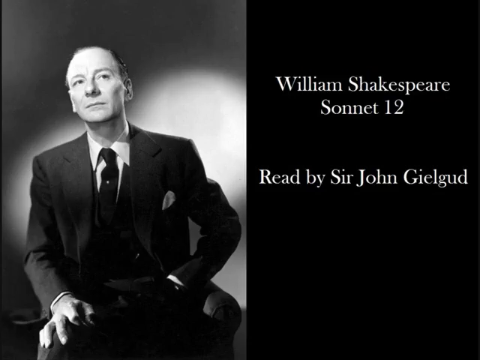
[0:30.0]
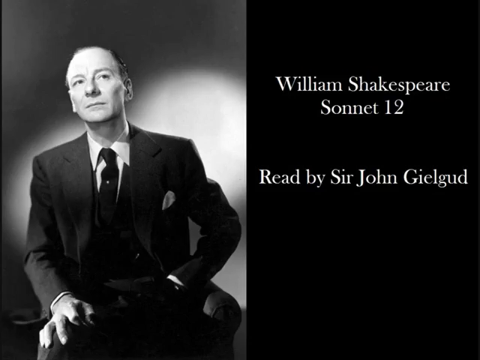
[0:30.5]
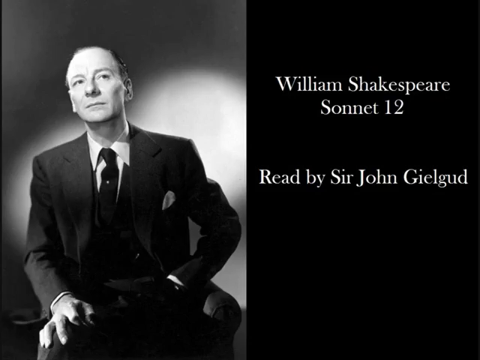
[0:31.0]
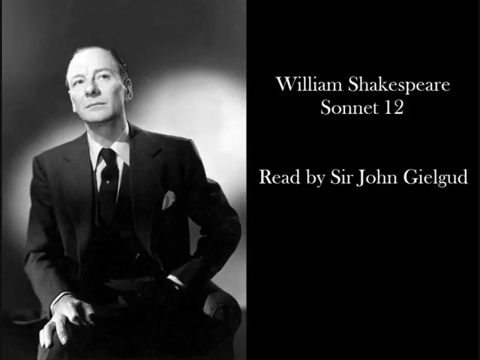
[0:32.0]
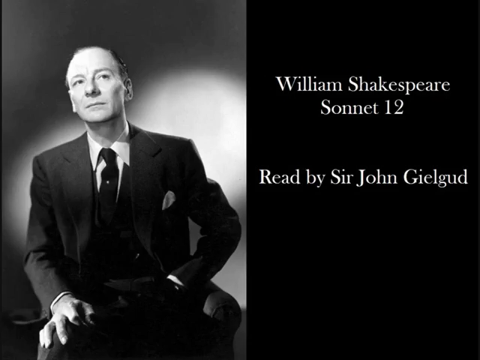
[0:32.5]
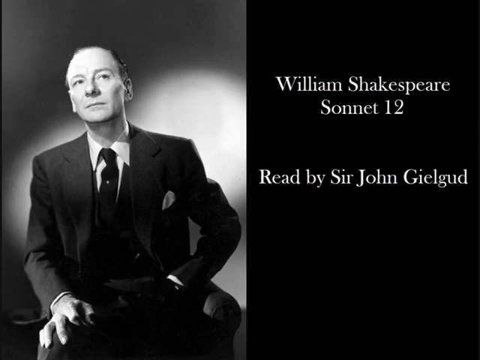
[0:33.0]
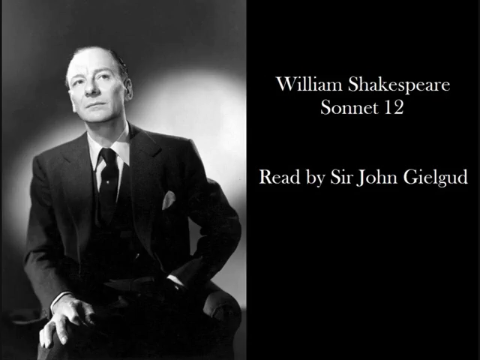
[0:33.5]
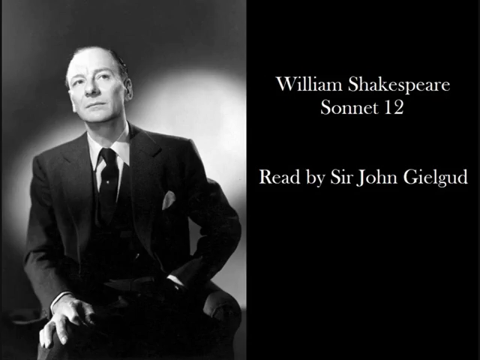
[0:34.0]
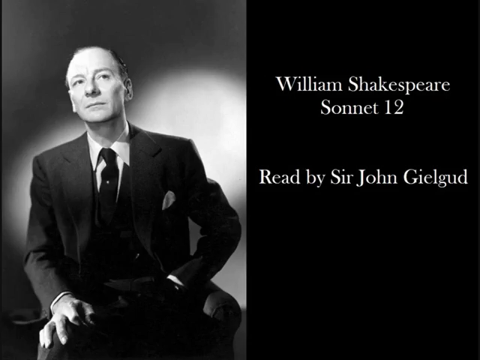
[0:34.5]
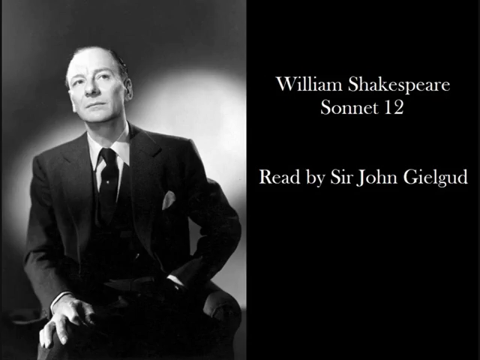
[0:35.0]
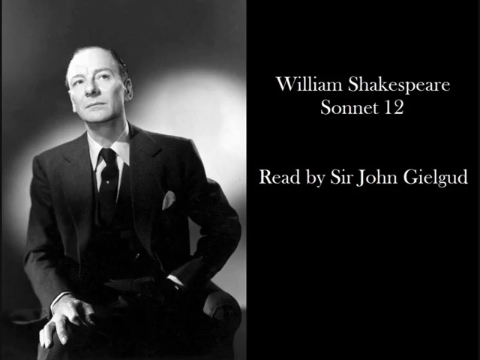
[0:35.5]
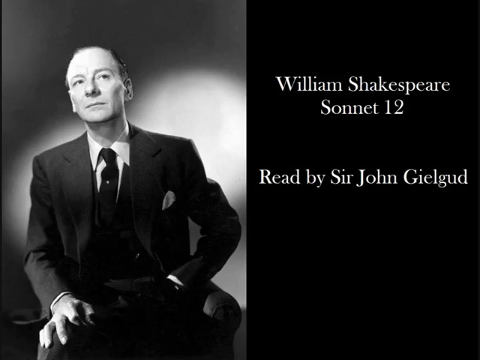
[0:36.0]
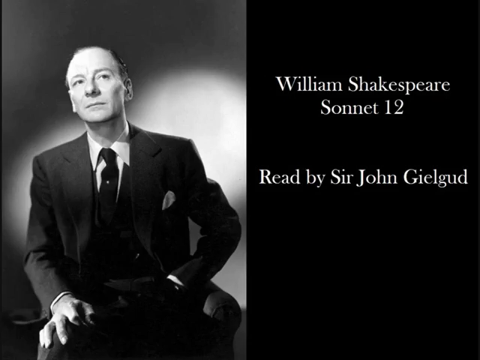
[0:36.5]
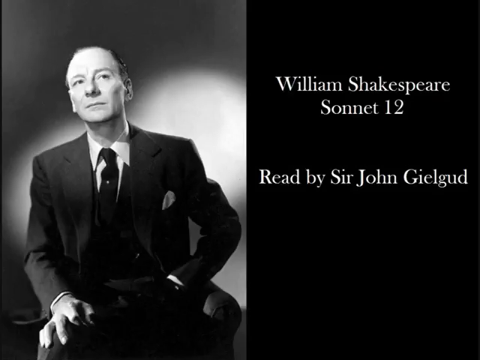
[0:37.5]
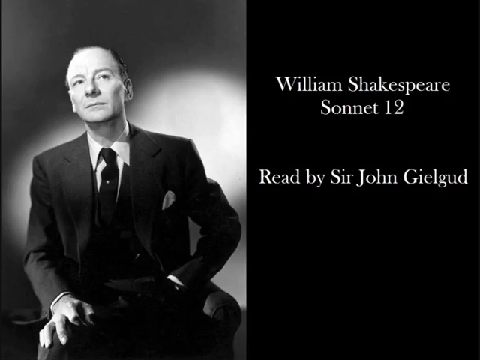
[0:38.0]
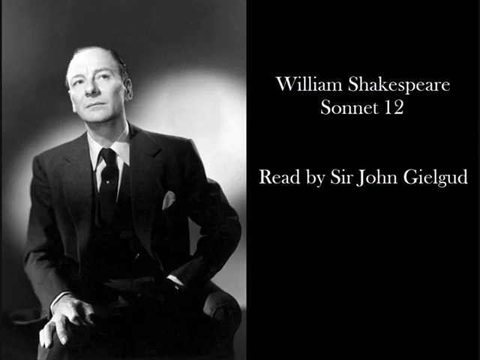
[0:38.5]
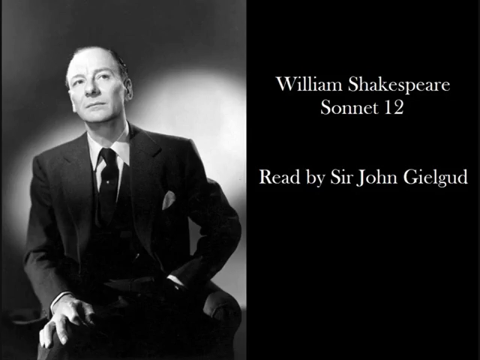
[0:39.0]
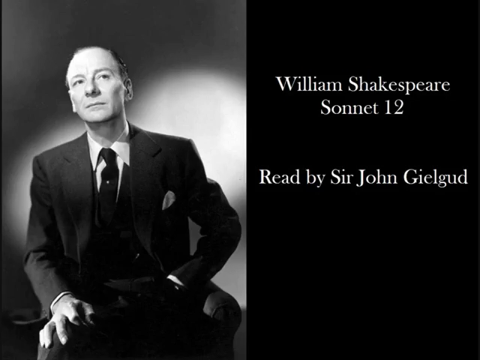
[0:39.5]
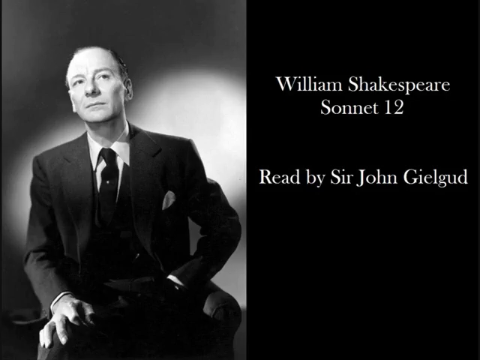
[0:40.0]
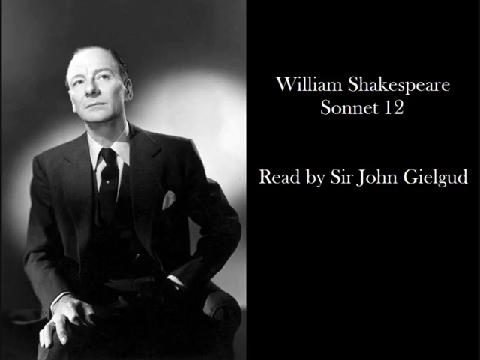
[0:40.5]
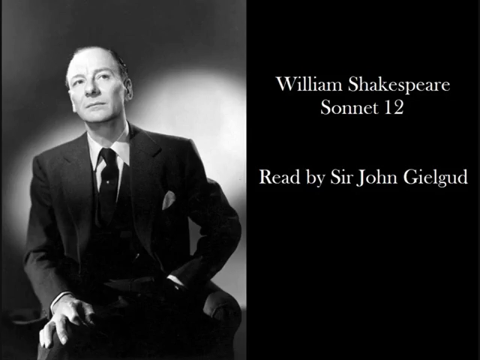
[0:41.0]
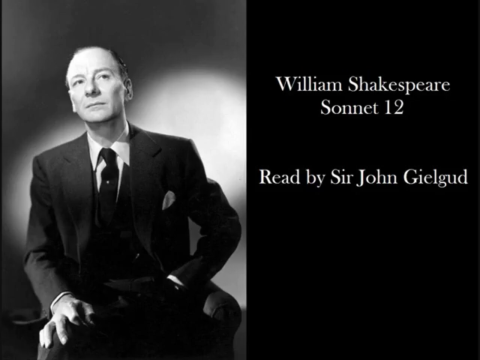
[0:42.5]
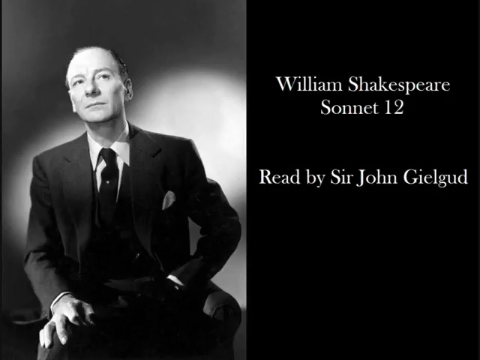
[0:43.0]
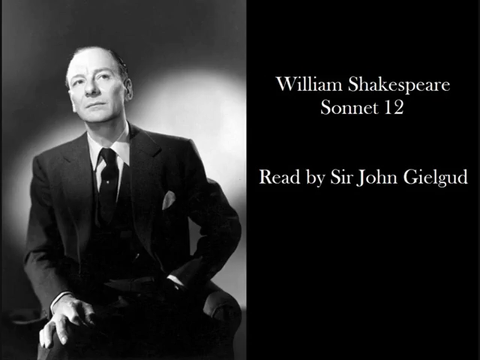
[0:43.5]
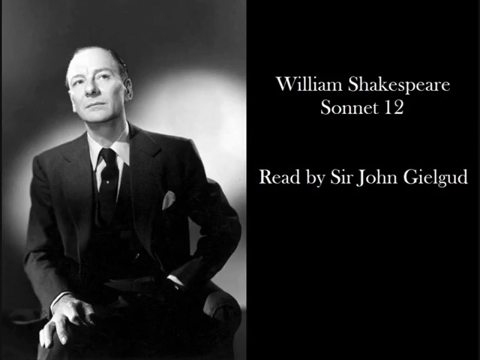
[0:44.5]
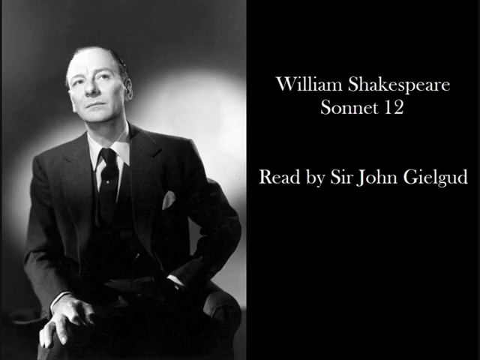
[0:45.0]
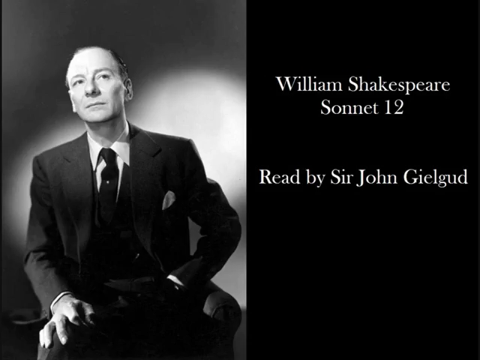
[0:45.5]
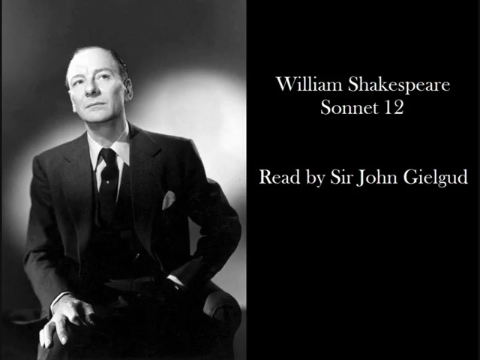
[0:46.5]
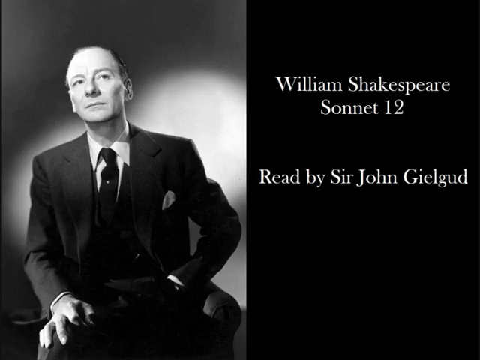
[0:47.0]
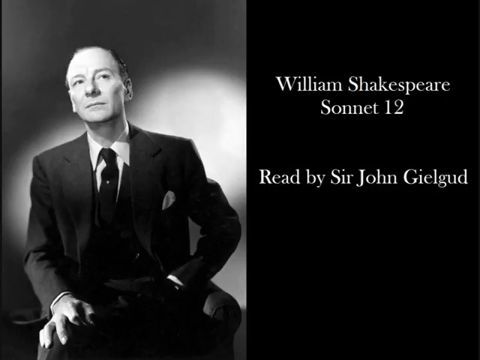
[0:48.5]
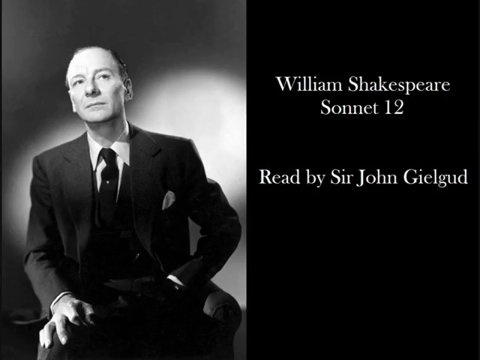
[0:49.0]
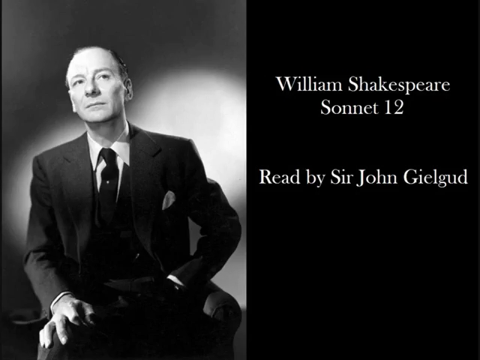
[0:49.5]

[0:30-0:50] The screen remains split in two with nothing changing. On the right, a black background carries white subtitles: "William Shakespeare sonnet 12, read by Sir John Gielgud". On the left is a black and white photo of Sir John sitting in an armchair, wearing a suit with a tie and tissue, his left hand in his pocket and his right hand on his leg. He is looking up. Two theatrical lights light him and the background behind him. He is getting bald and has short hair, with an aristocratic and charismatic look; he looks very much like a Shakespearean type of actor, very British and elegant. He is apparently about to read an audiobook or radio drama.